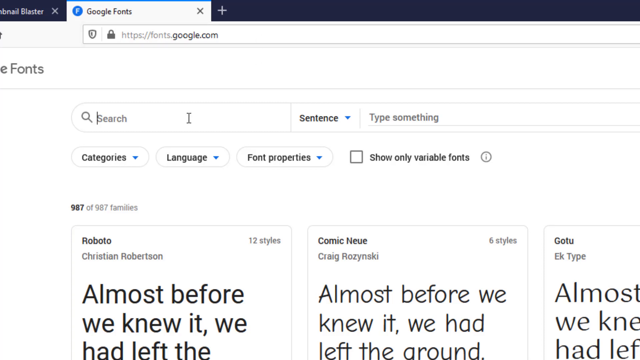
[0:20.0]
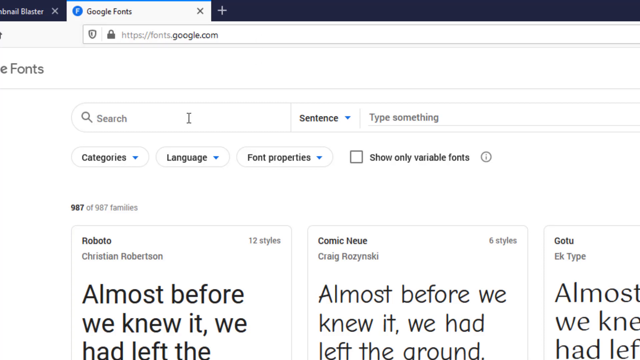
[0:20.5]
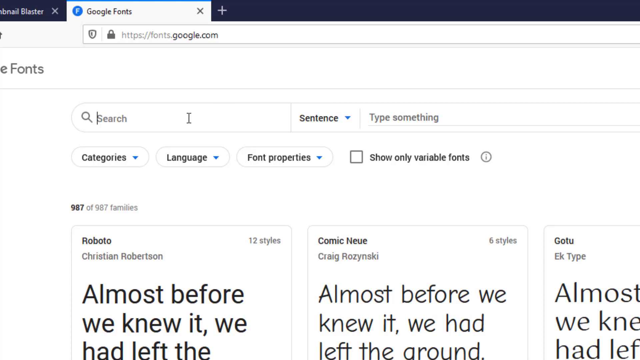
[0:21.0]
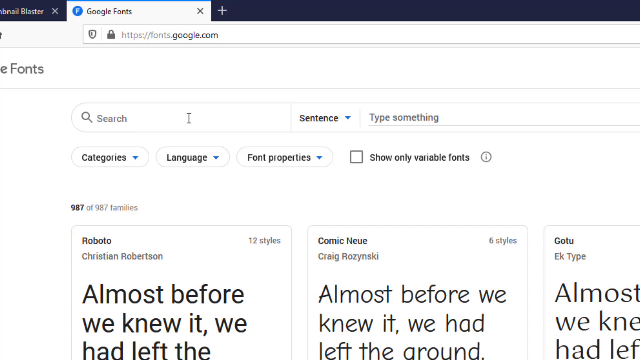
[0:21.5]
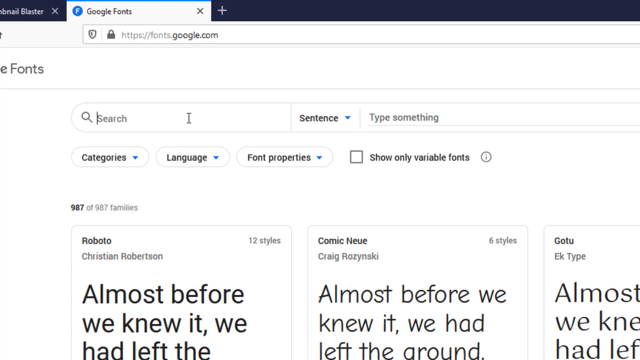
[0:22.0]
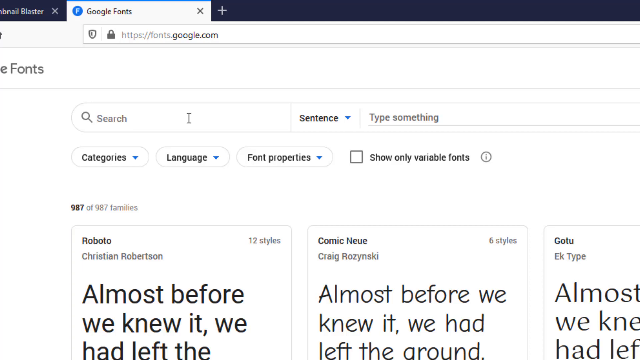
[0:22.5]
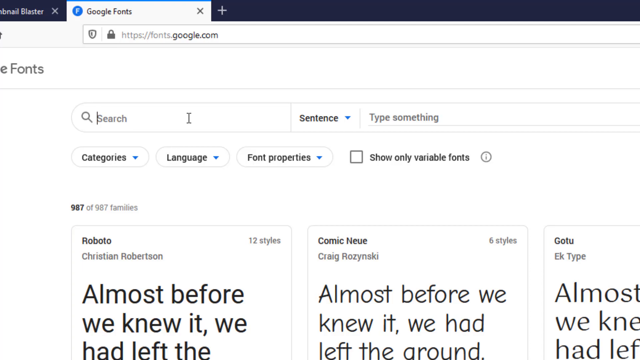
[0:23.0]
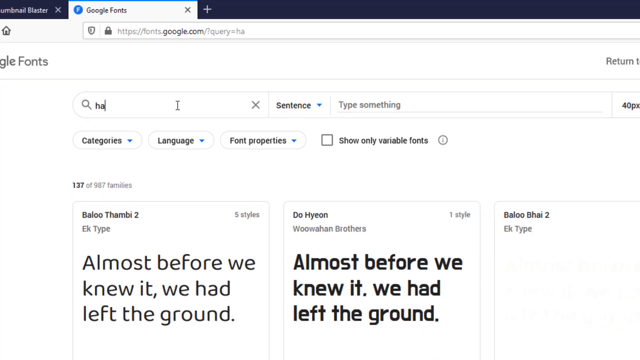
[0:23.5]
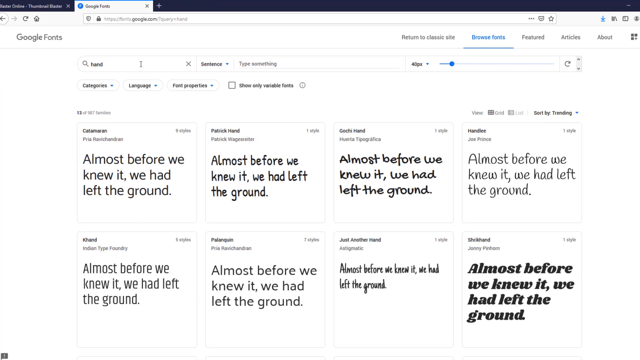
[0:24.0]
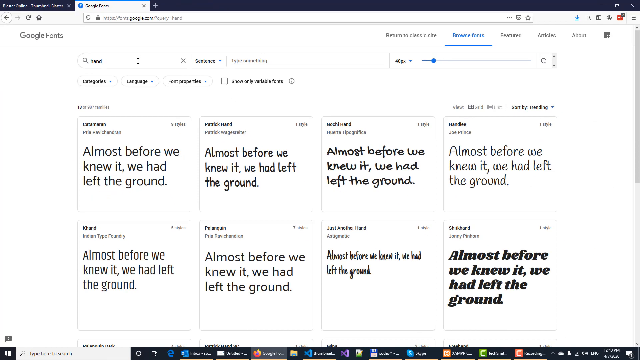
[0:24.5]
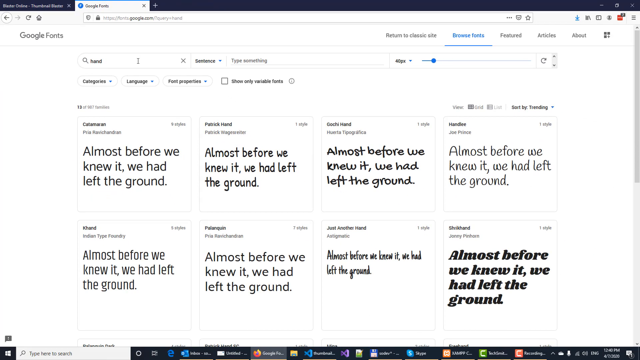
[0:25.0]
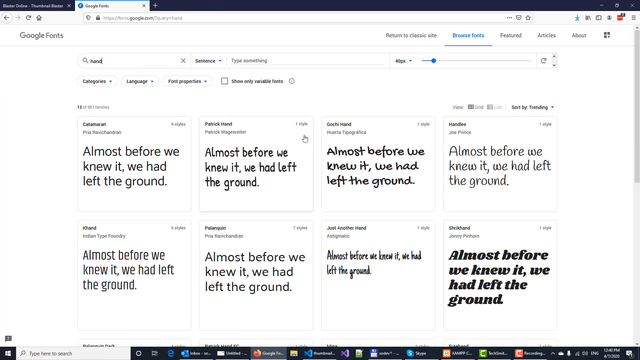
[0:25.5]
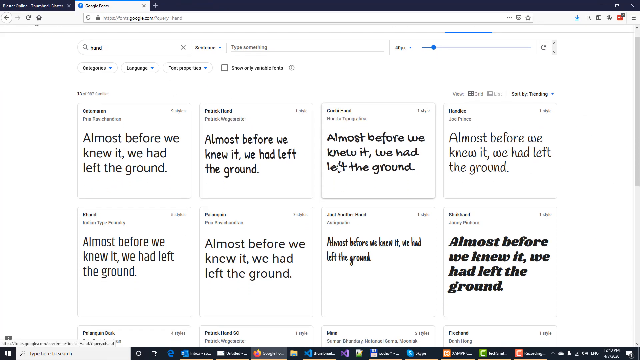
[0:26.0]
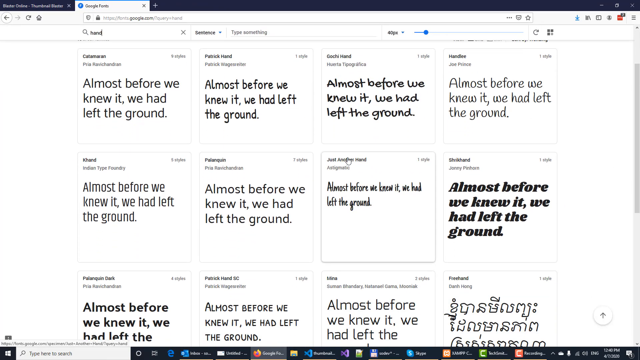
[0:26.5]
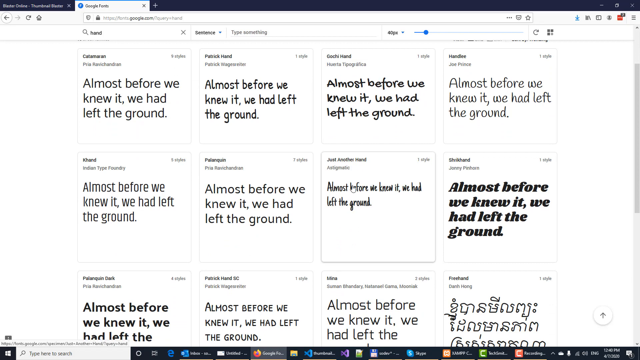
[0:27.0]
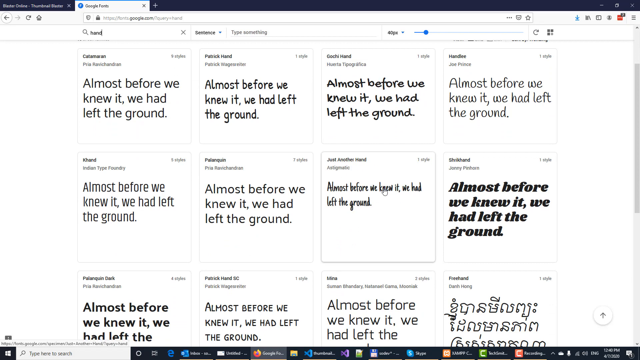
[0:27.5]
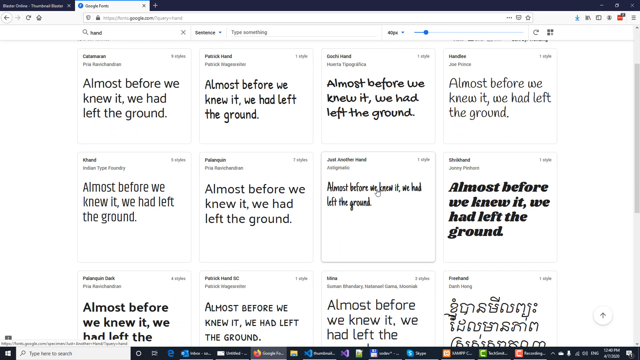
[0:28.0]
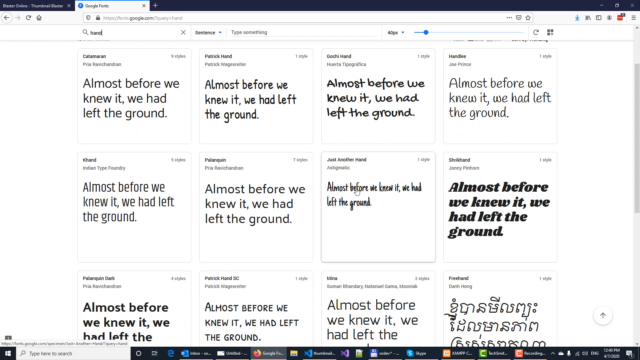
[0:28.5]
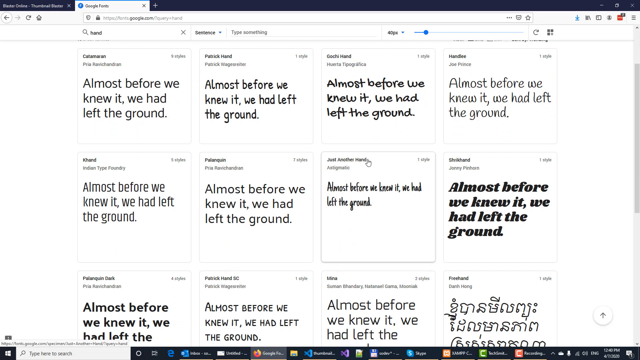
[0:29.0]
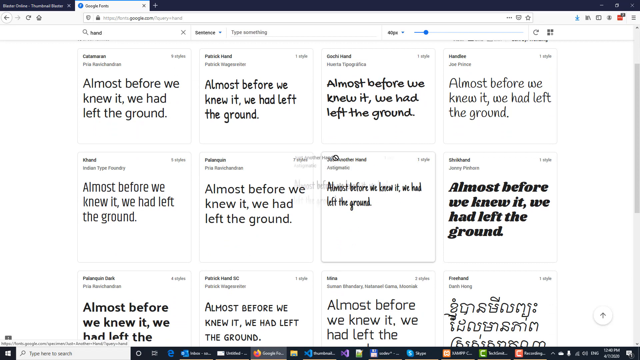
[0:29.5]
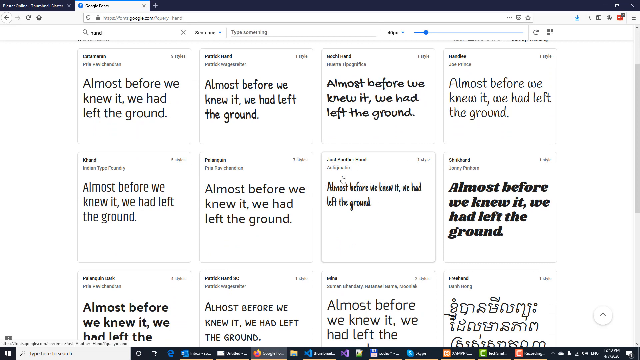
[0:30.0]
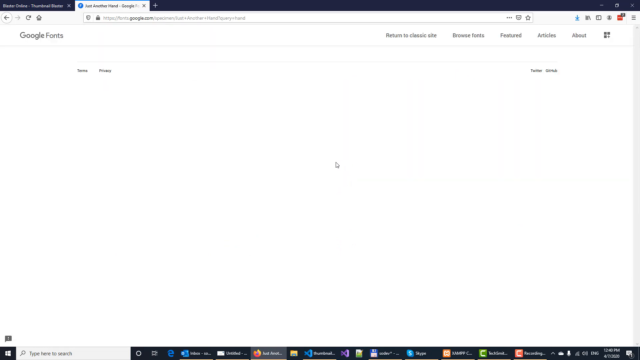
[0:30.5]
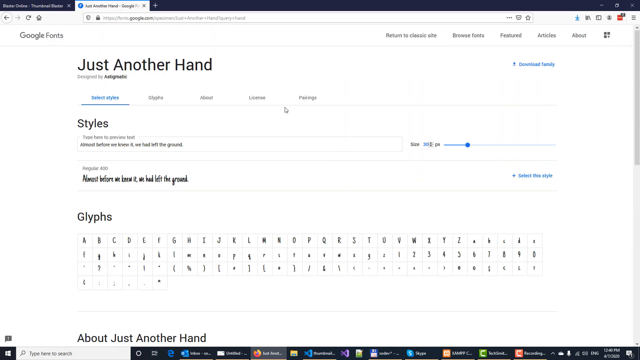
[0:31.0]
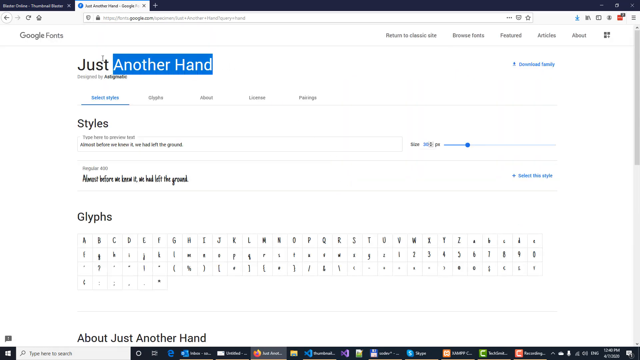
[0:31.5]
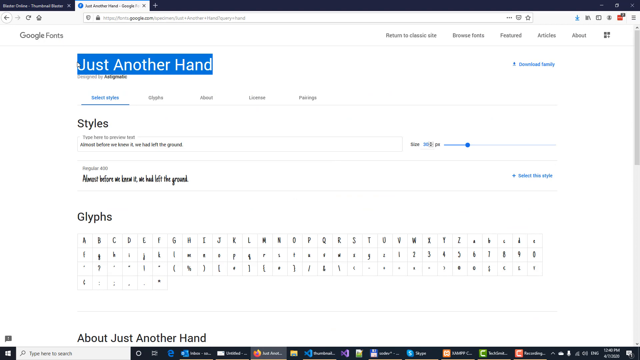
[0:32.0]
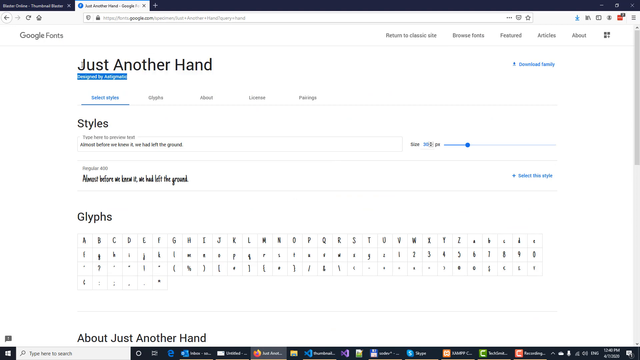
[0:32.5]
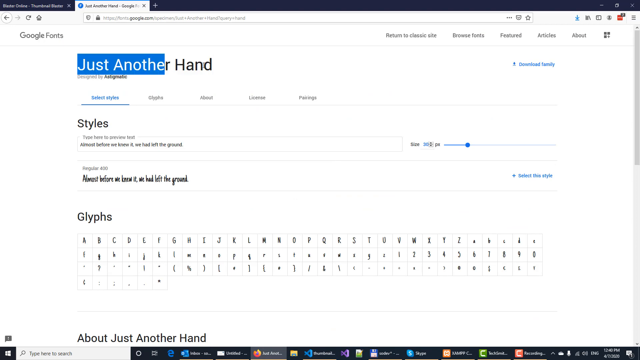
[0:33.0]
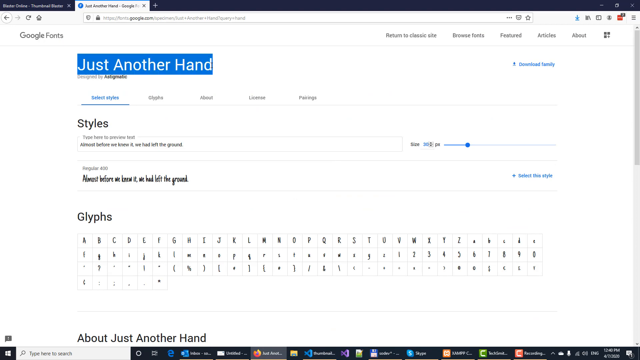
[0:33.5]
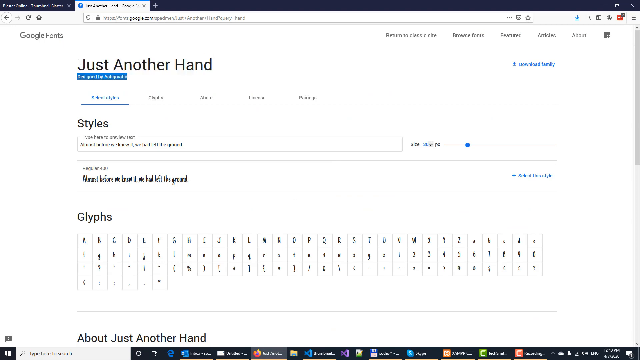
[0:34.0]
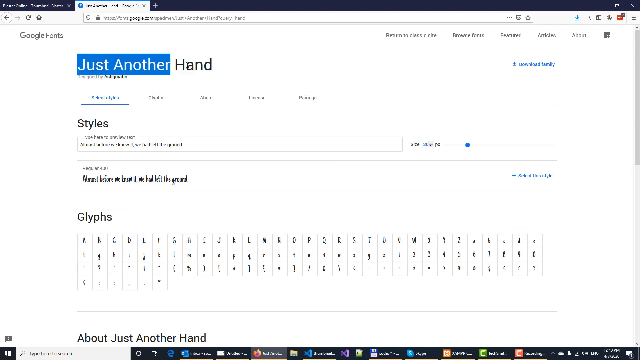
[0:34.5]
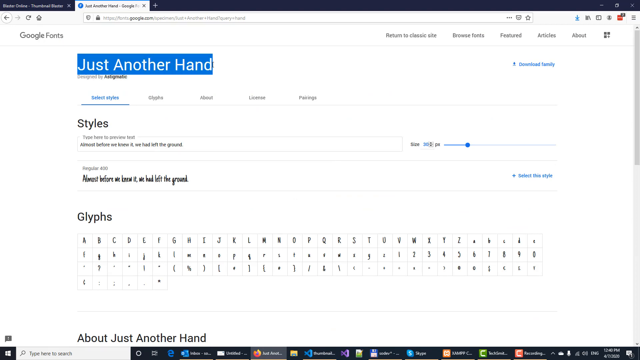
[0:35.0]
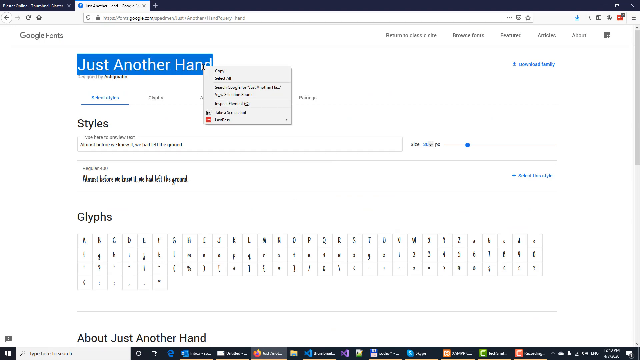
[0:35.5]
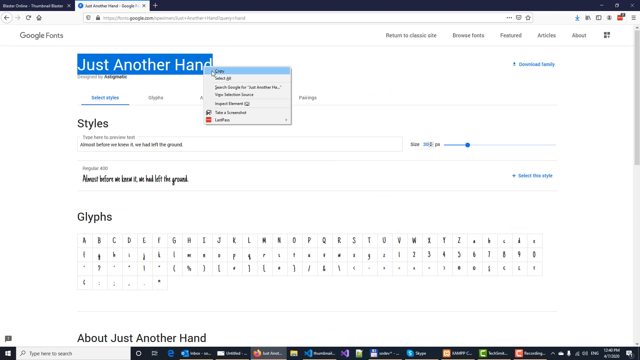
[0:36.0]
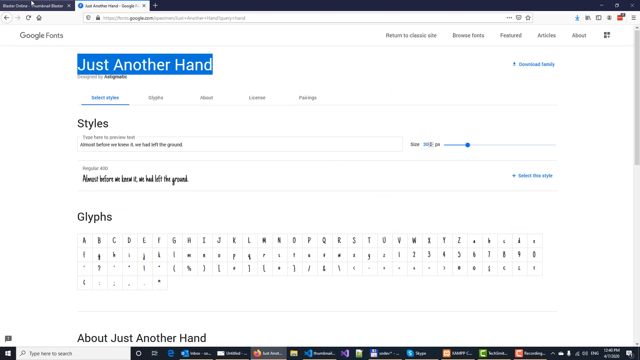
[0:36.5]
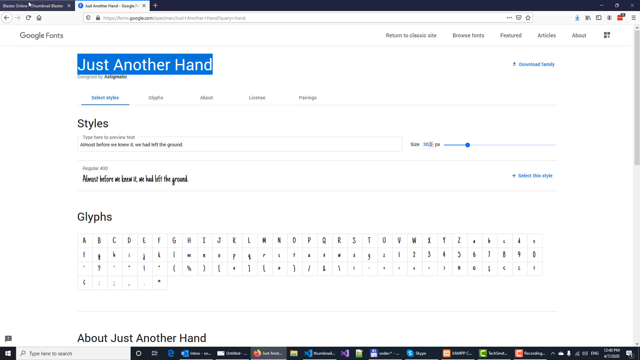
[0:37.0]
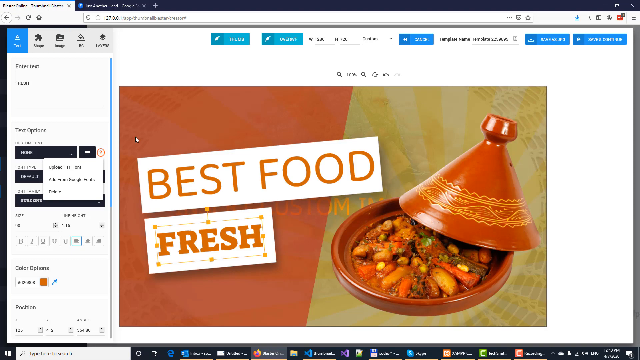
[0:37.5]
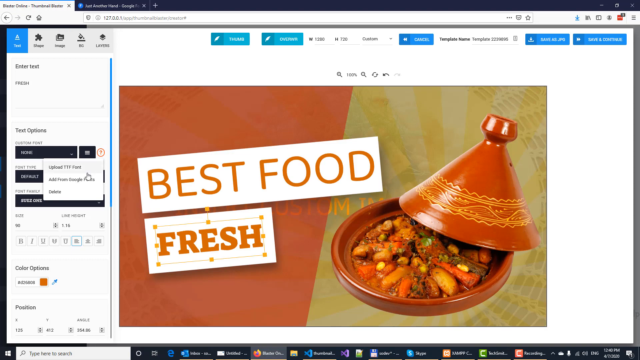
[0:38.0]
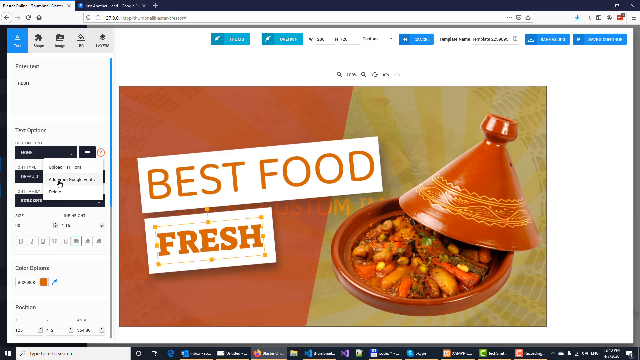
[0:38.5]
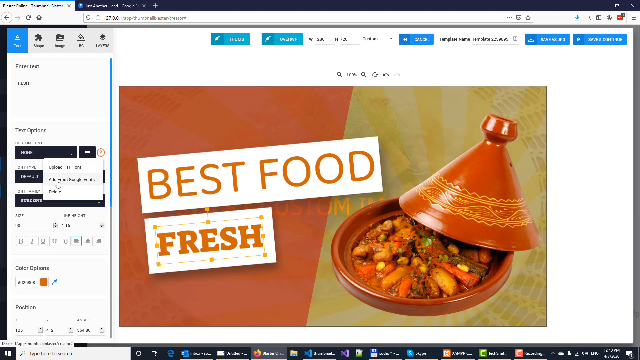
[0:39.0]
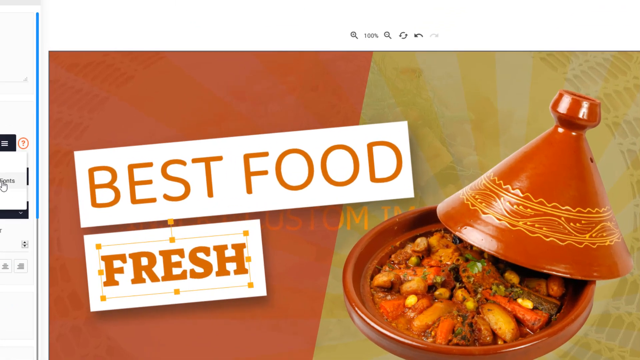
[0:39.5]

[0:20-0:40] The Google Fonts tab is shown zoomed in, then zooms out as the word "hand" is typed into the search bar. A list of fonts with "hand" in their titles appears, each displayed in a sample sentence. A font style is picked, opening that font's page, and the text "just another hand" is highlighted to copy it. The user then goes to the next tab, an editing and presentation screen for an advertisement, and appears to click add from Google Fonts. The advertisement for "best food fresh" is in the middle of the screen, showing a vegetable dish inside a fancy bowl.